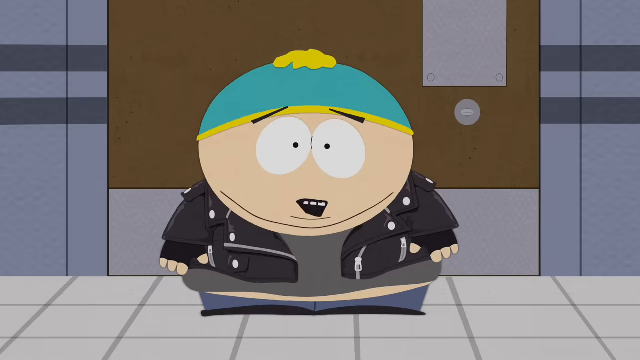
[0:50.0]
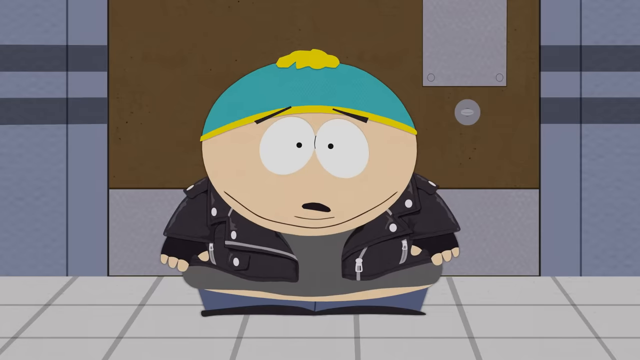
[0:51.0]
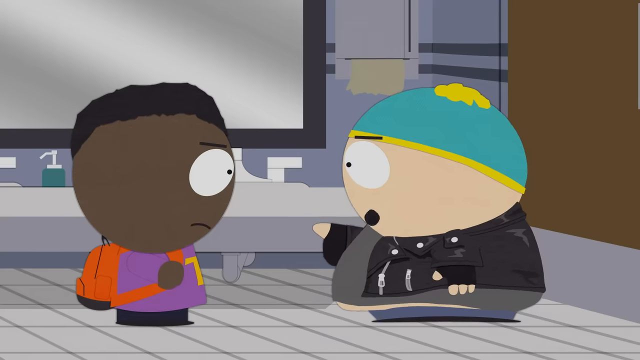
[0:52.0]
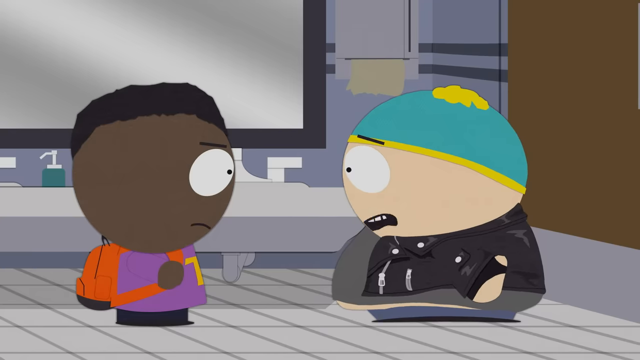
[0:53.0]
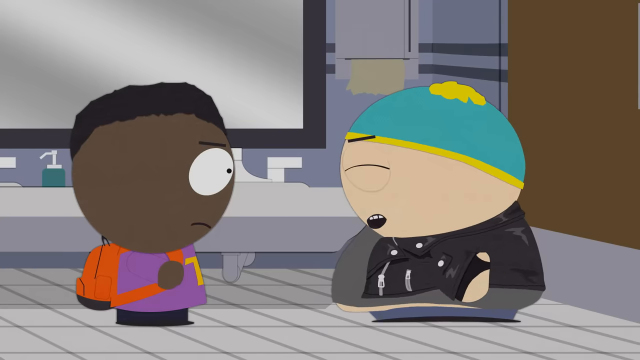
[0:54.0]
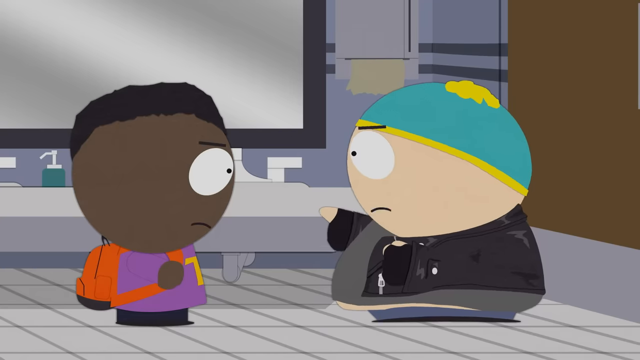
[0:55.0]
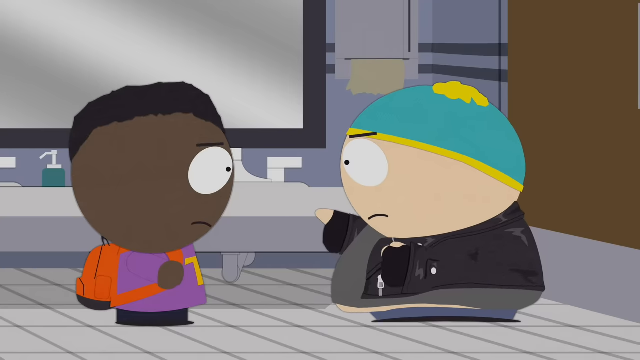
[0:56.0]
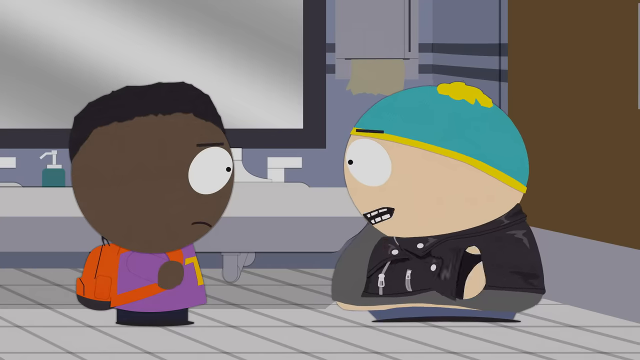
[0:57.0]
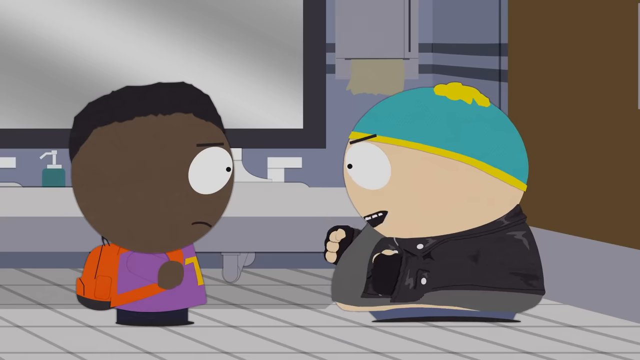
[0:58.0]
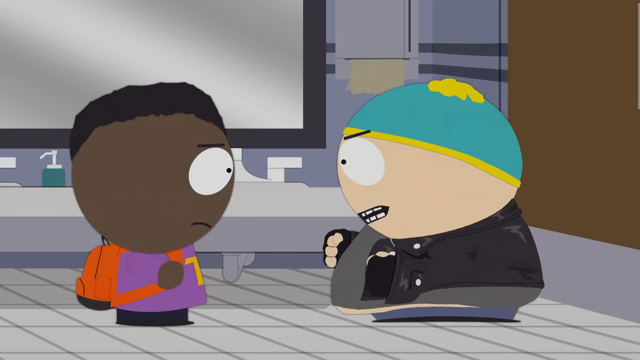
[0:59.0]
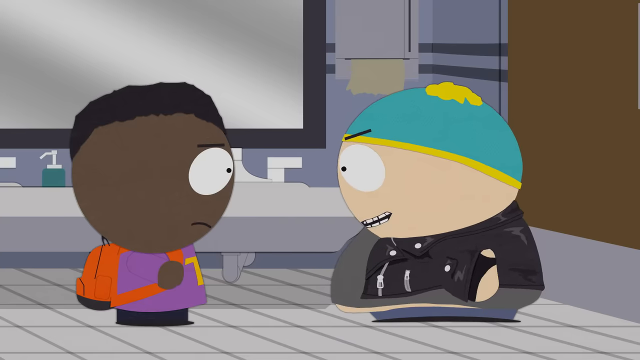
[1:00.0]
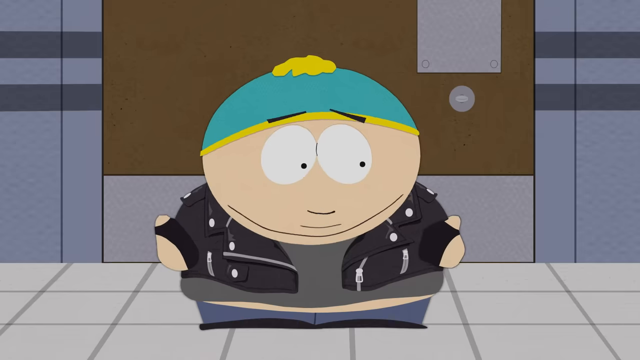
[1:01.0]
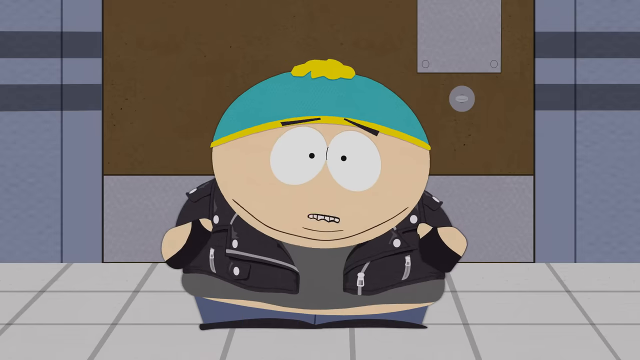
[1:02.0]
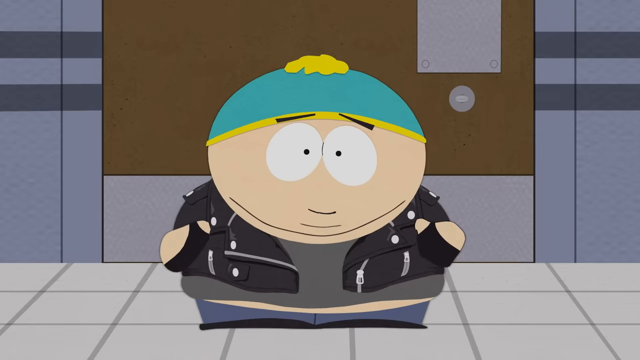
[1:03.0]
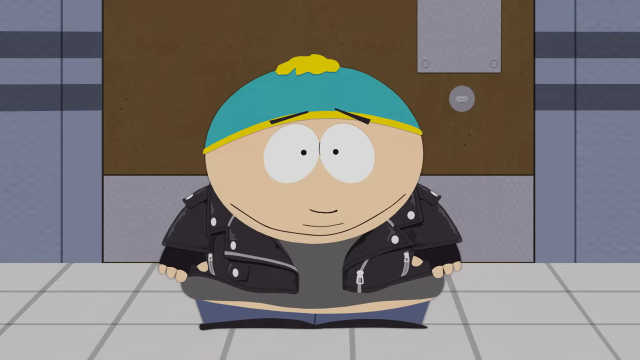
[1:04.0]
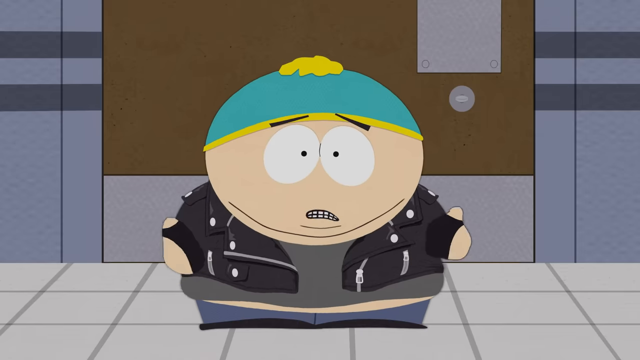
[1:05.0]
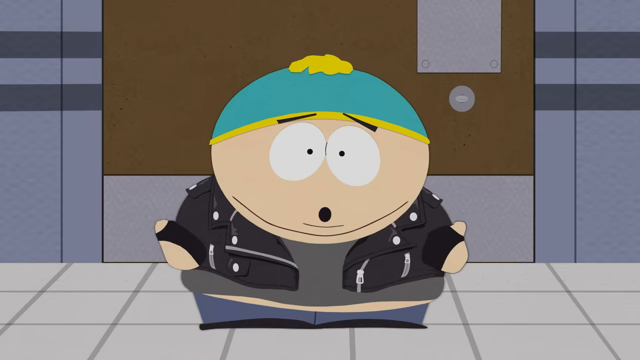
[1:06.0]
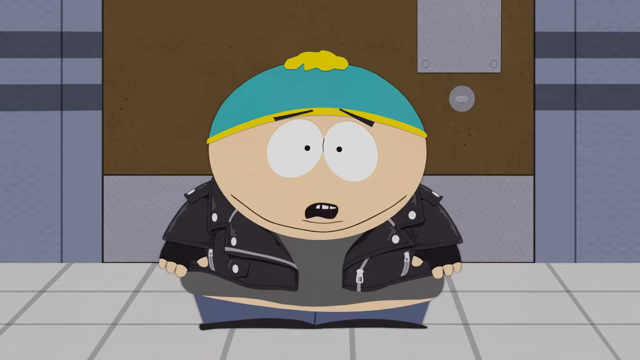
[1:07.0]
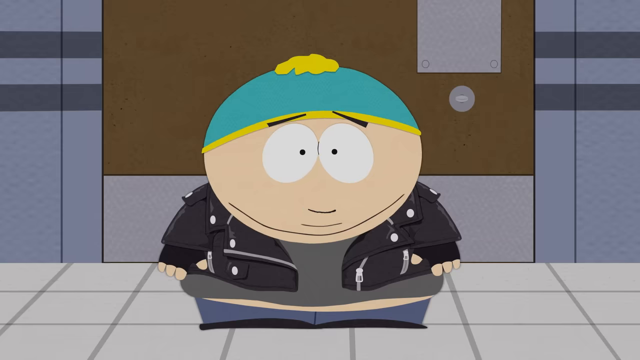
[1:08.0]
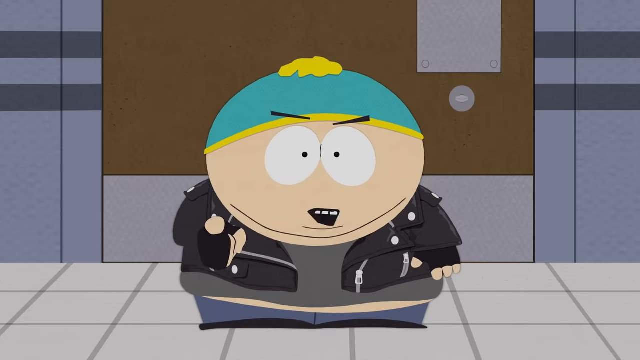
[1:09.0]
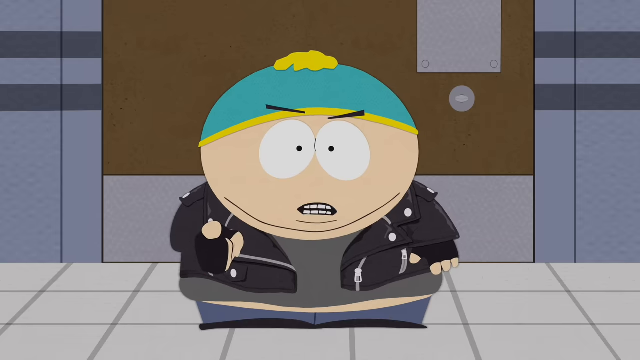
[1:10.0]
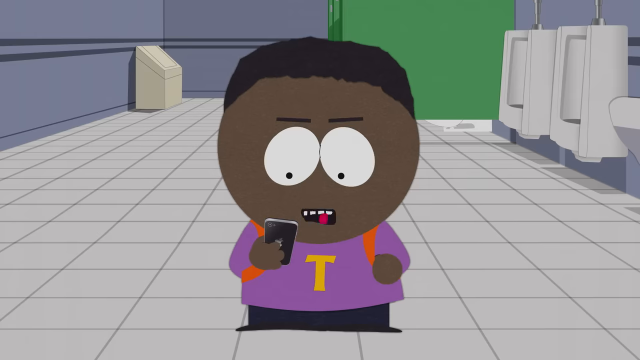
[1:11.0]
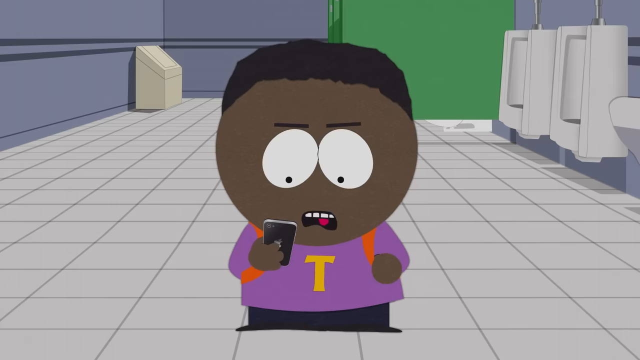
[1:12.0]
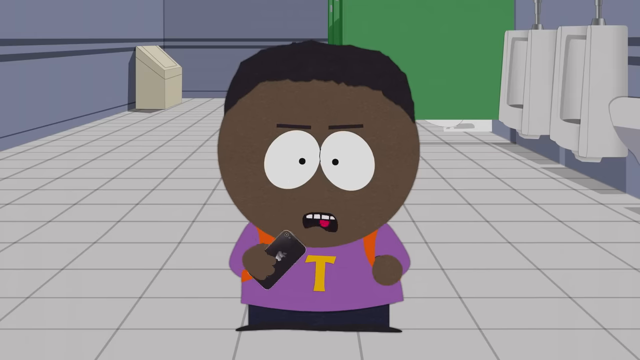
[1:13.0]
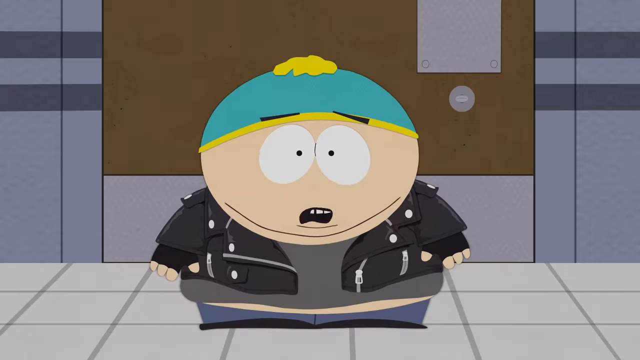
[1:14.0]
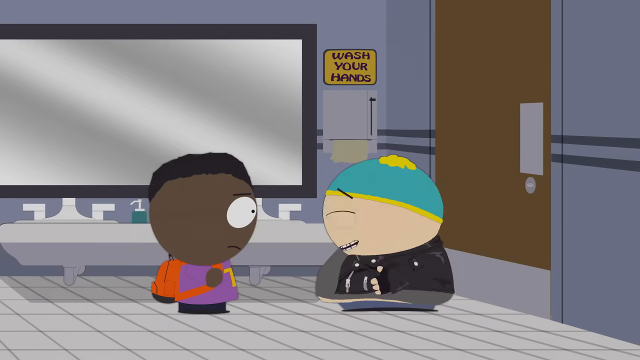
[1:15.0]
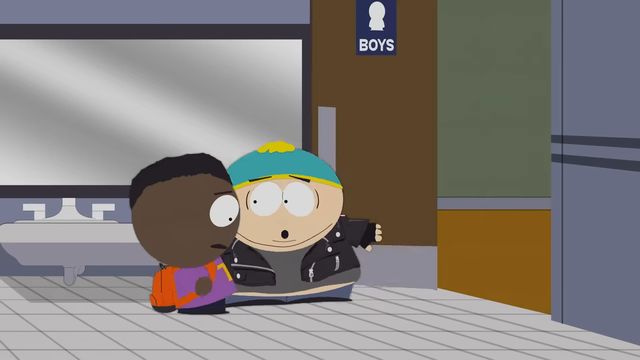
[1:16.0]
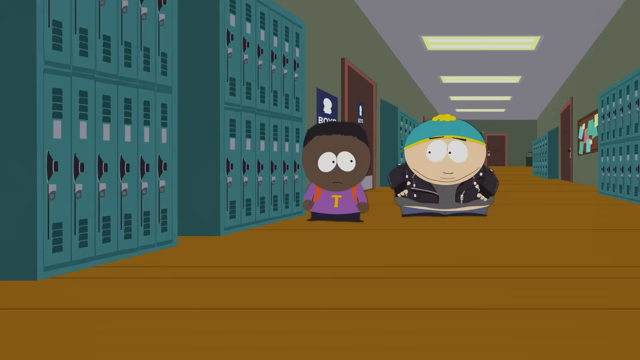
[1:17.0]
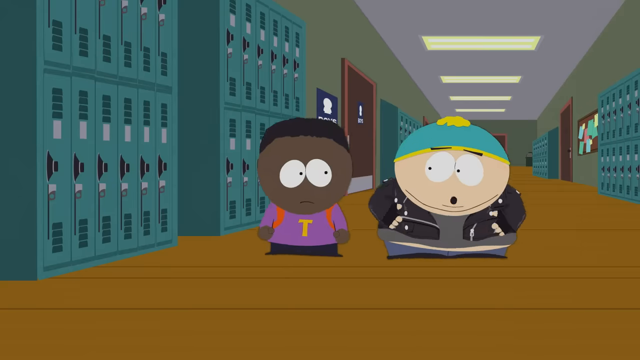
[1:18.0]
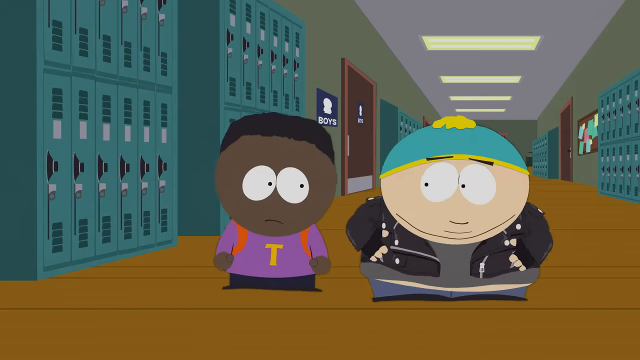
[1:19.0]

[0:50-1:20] The characters are still in the bathroom. The one in the leather jacket and hat still stands in front of the door, on the right-hand side of the screen, talking, looking very worried at the other character and pointing at him quite aggressively. The other character, on the left, has dark brown skin and black hair and wears a long-sleeve bright purple top with a yellow letter T in the centre, black trousers and shoes, and a mostly orange backpack with some black accents. The characters keep talking, mostly the one in the leather jacket. The darker-skinned character takes out his phone and looks at it before the character in the leather jacket grabs him and pulls him out of the bathroom, and they walk down the school corridor. The character in the leather jacket is much fatter than the one on the left, with a very large belly overhanging his trousers. The bathroom floor tiles are light grey, and the walls are dark grey with darker grey stripes.